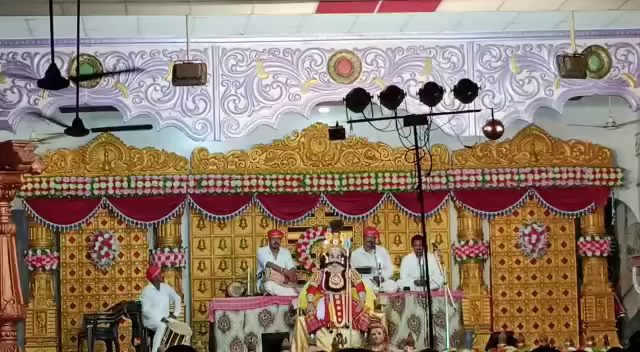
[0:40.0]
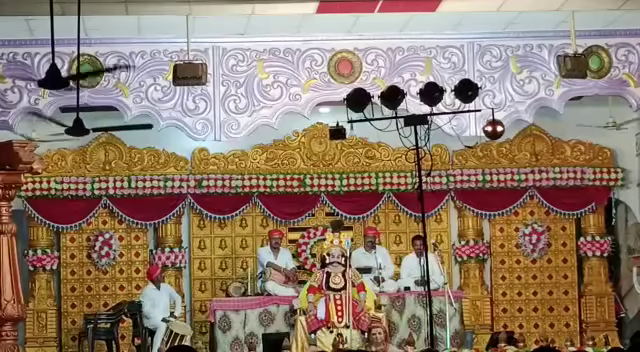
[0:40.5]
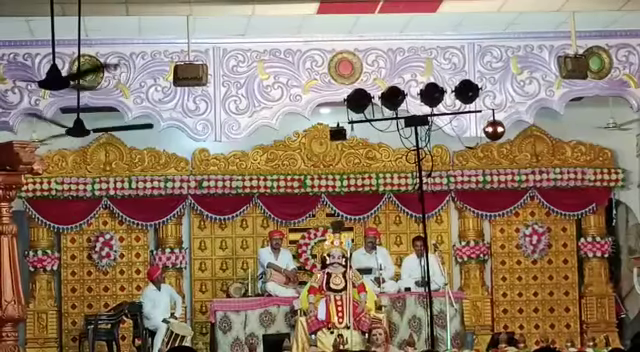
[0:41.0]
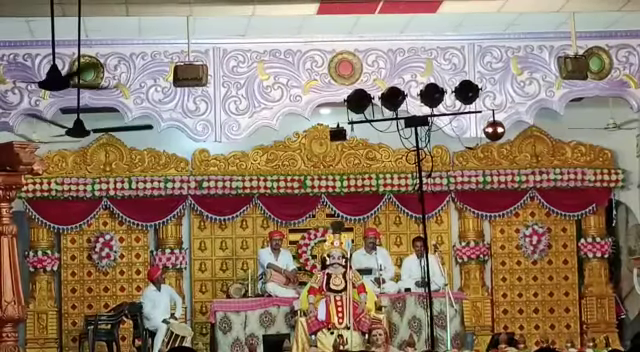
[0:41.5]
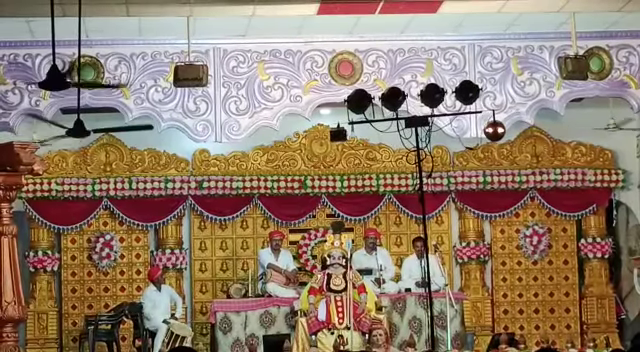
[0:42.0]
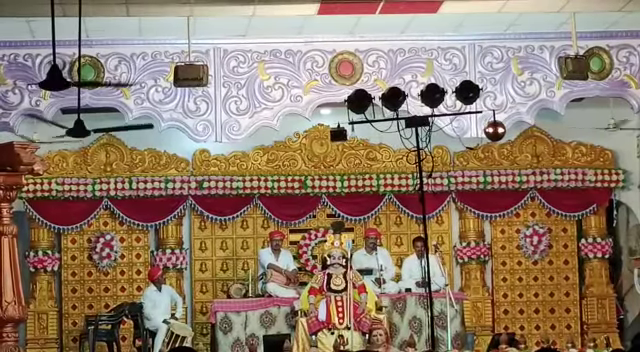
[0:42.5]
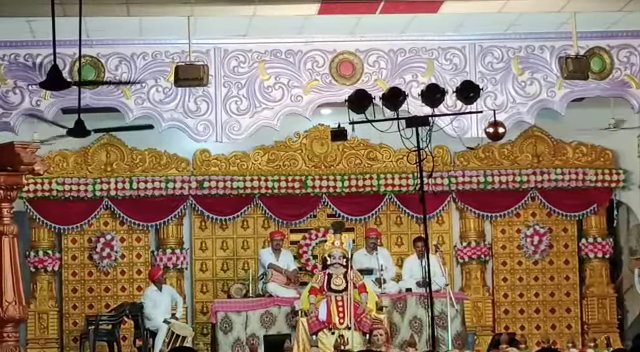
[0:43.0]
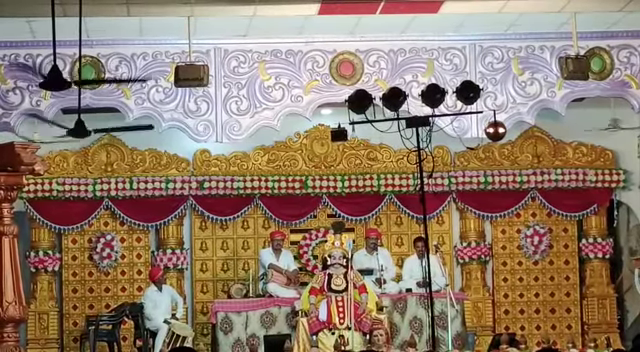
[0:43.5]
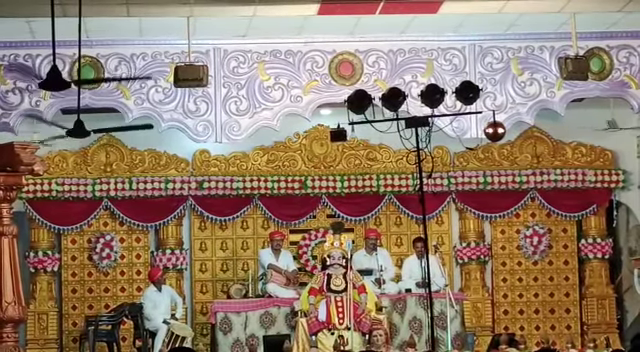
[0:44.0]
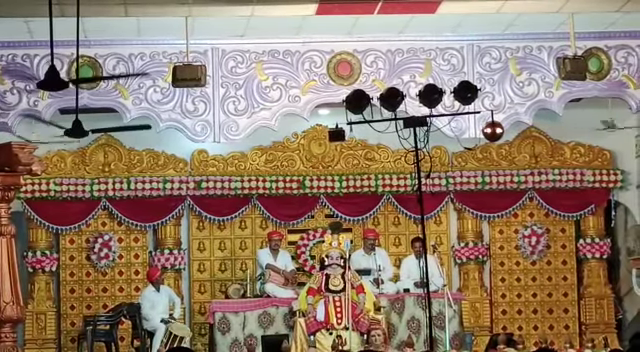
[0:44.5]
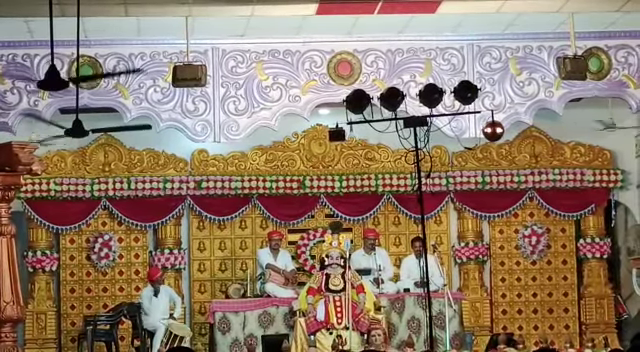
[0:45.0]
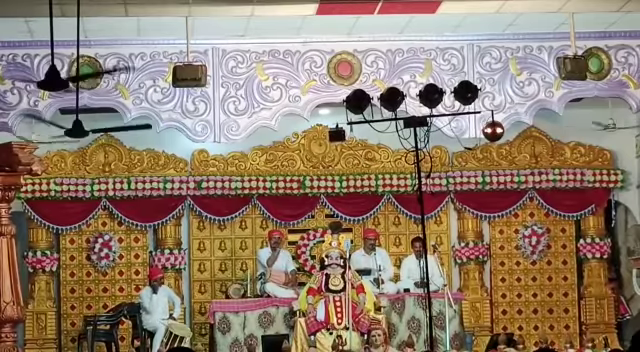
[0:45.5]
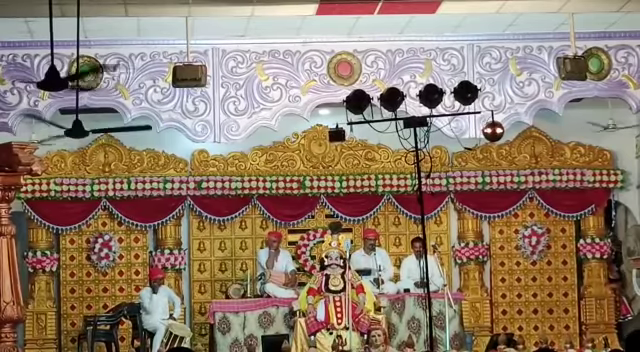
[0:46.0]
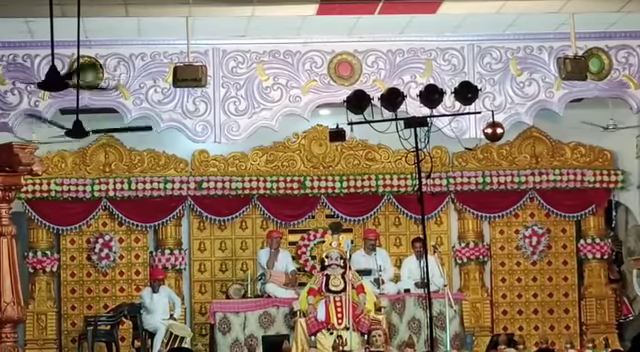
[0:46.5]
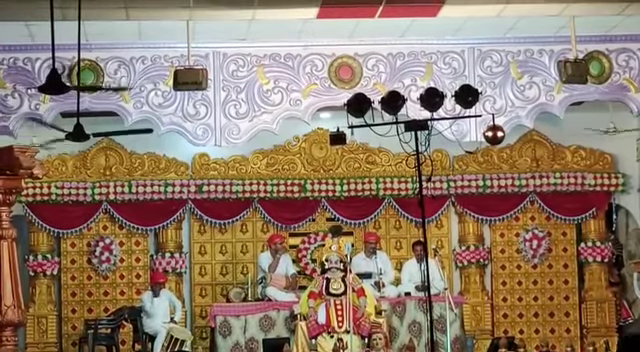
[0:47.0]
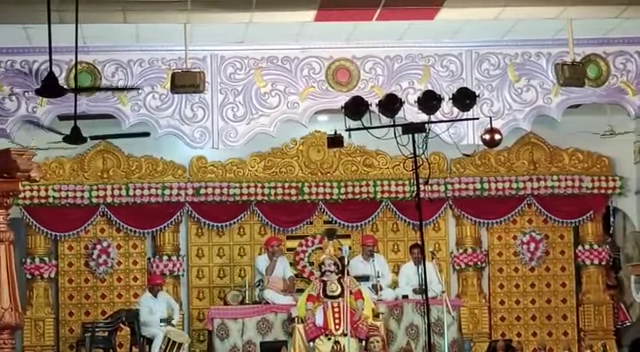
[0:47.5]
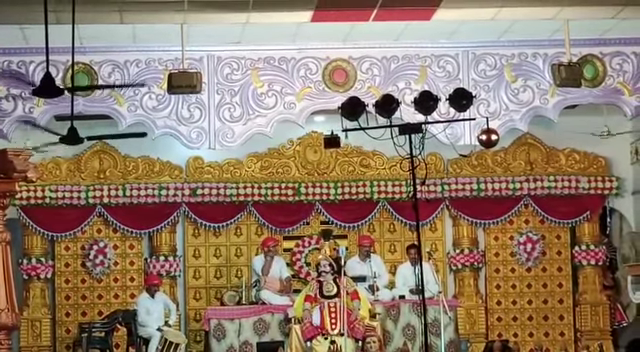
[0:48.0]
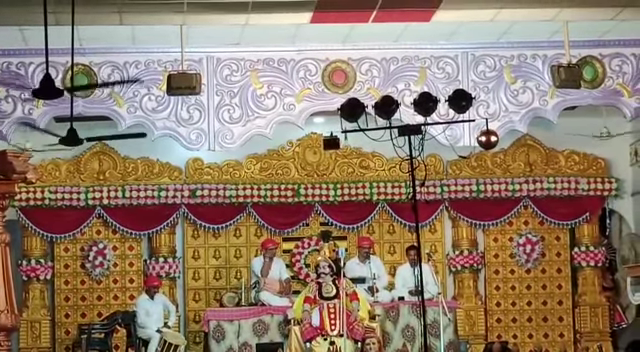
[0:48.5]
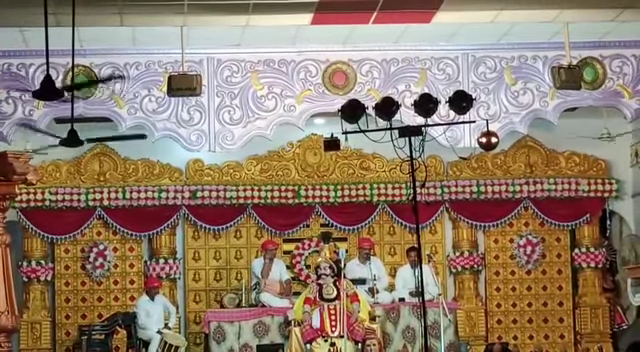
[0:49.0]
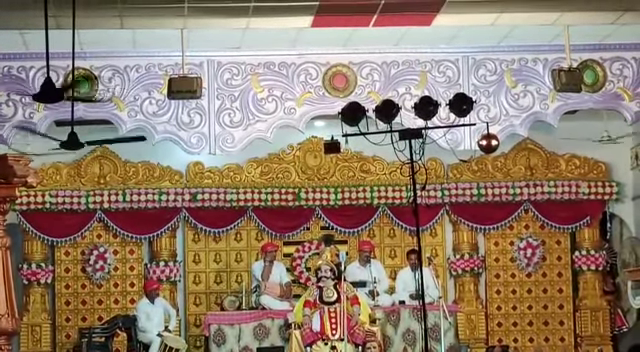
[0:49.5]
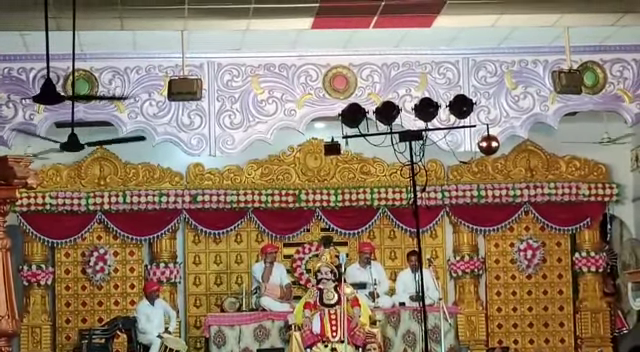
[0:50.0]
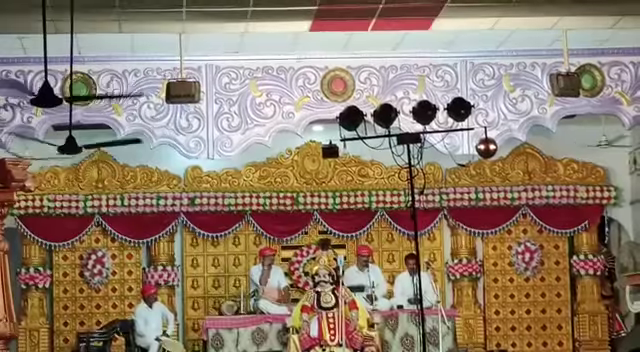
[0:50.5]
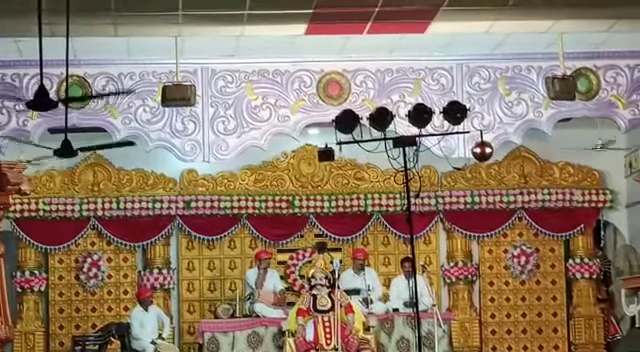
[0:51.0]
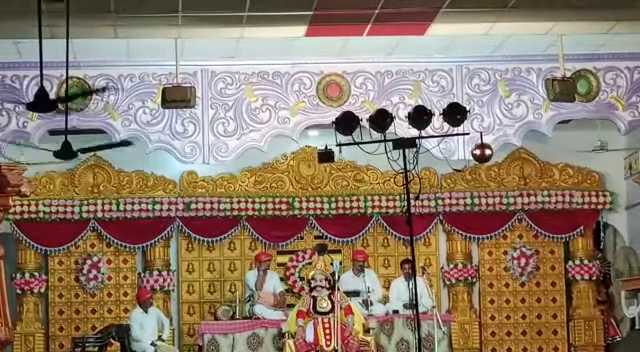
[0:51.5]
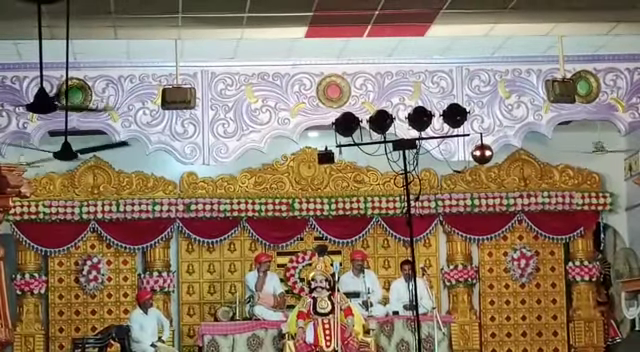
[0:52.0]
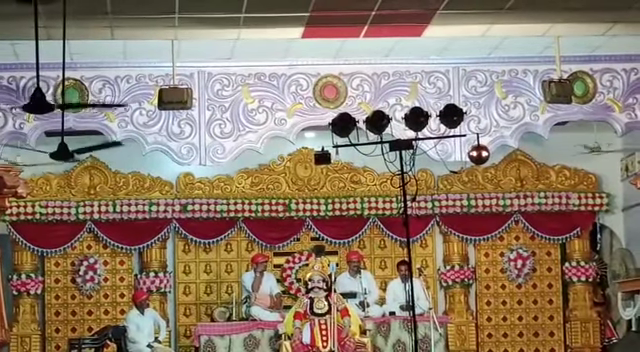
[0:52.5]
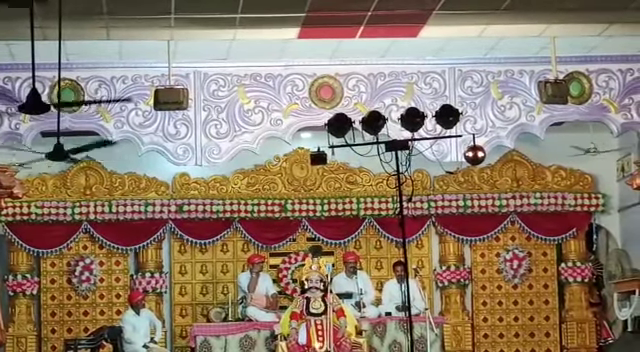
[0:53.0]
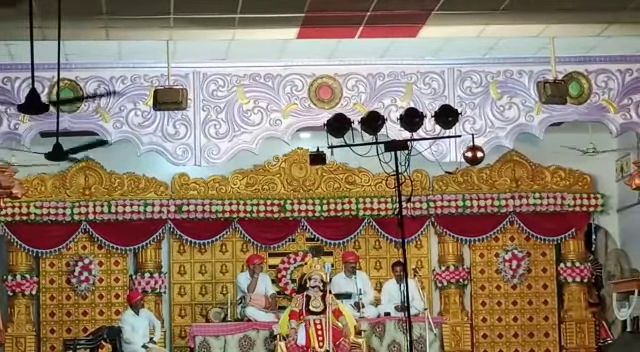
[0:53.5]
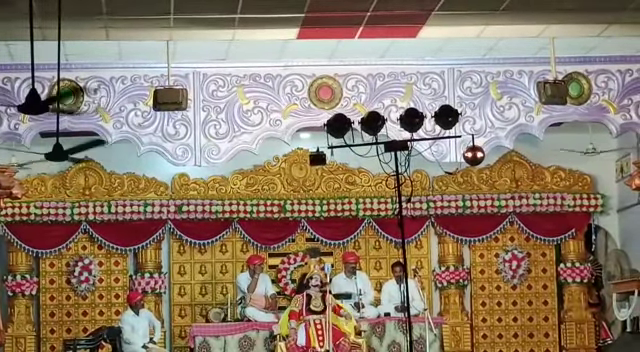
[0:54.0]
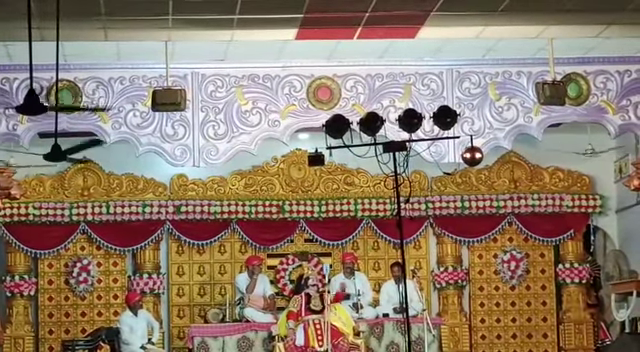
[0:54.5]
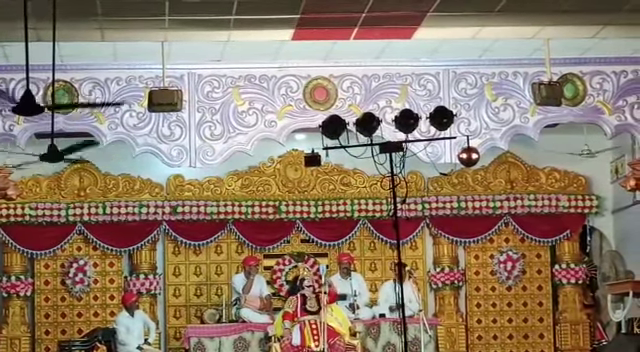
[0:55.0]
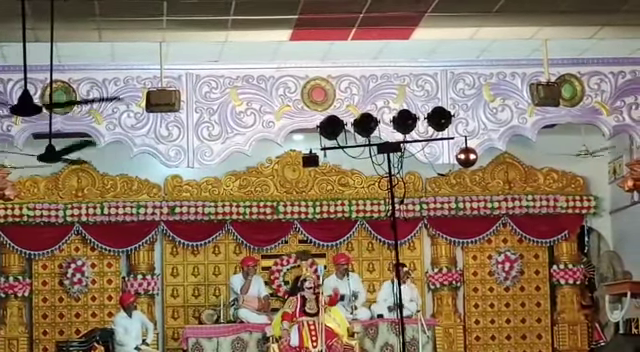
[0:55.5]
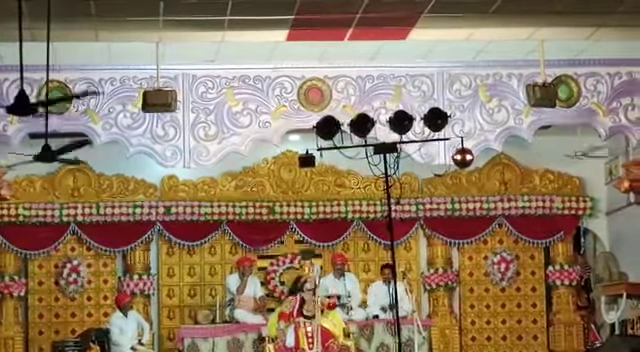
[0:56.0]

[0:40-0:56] Four people who appear to be Indian are on what appears to be a stage. Three of them wear turbans and one does not, and they are dressed in Indian attire. In front of them is a statue or god, some Indian god. The background appears to be a very ornate Indian design, with gold, red and tassels.